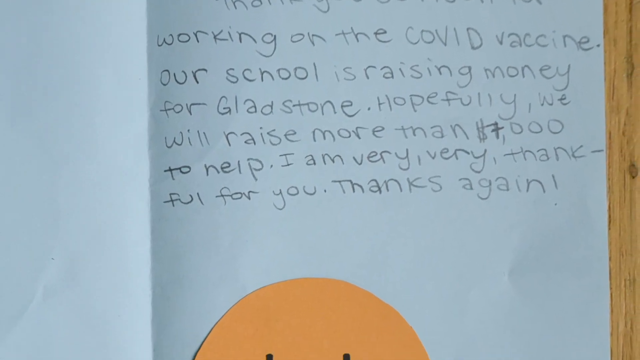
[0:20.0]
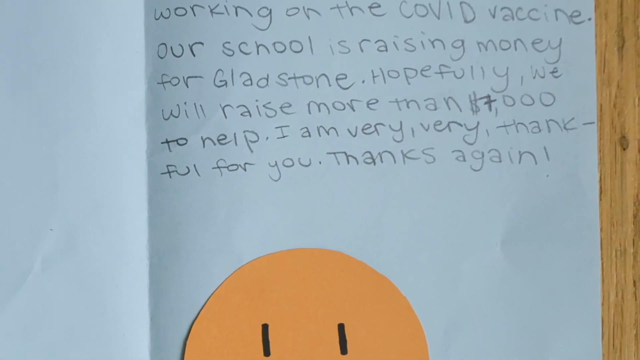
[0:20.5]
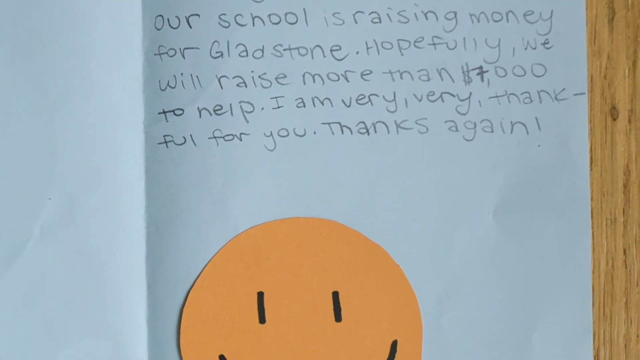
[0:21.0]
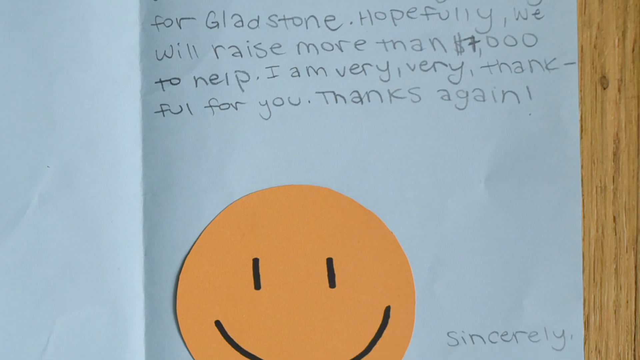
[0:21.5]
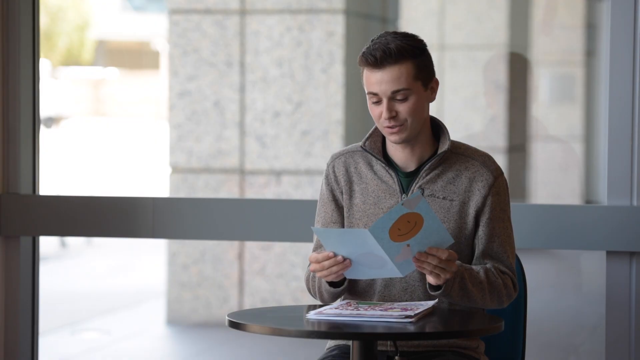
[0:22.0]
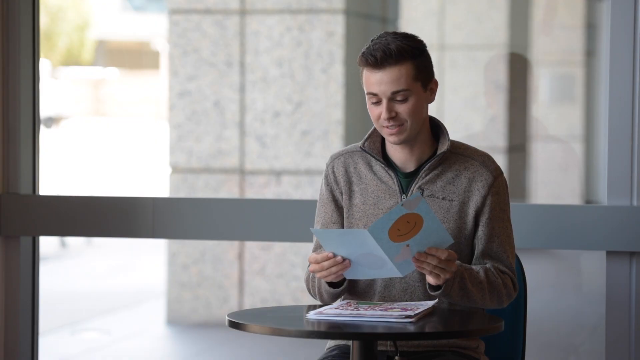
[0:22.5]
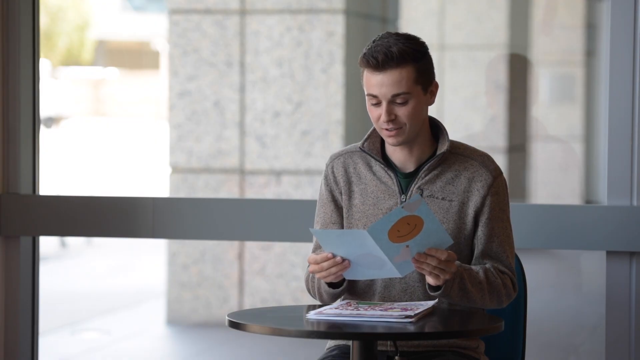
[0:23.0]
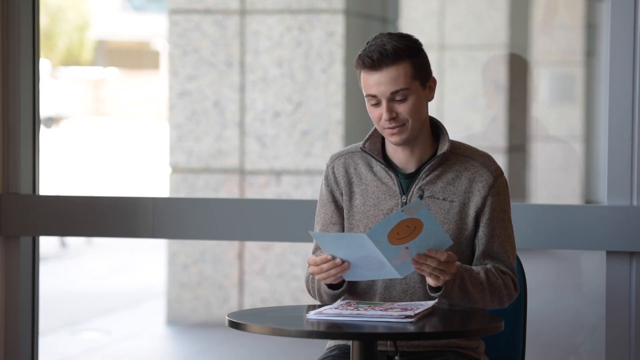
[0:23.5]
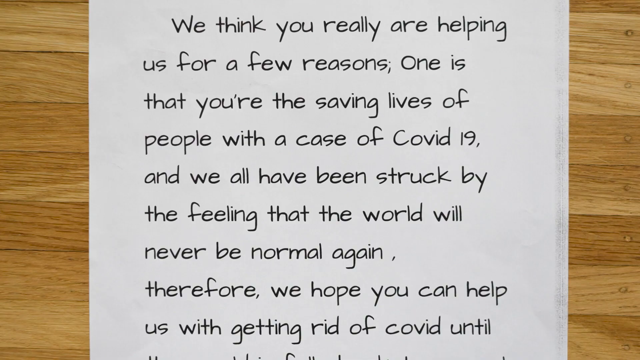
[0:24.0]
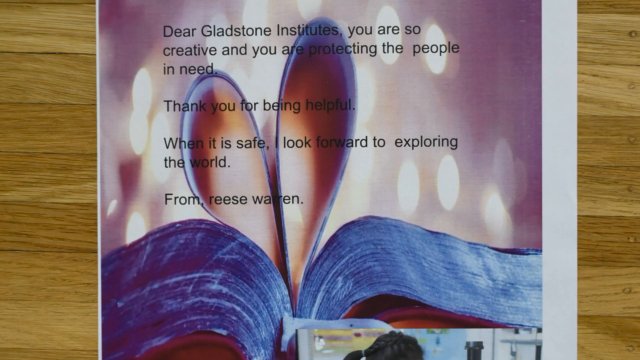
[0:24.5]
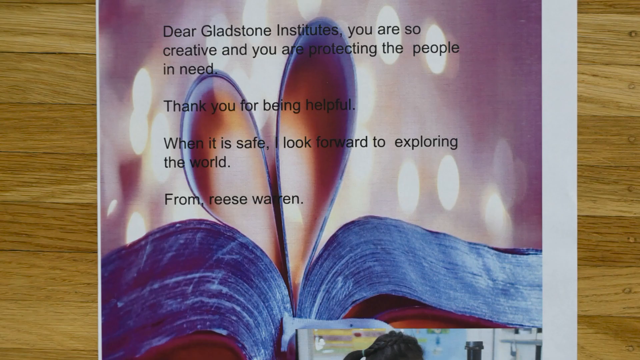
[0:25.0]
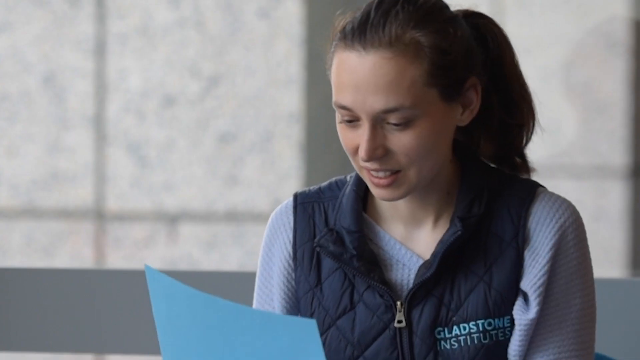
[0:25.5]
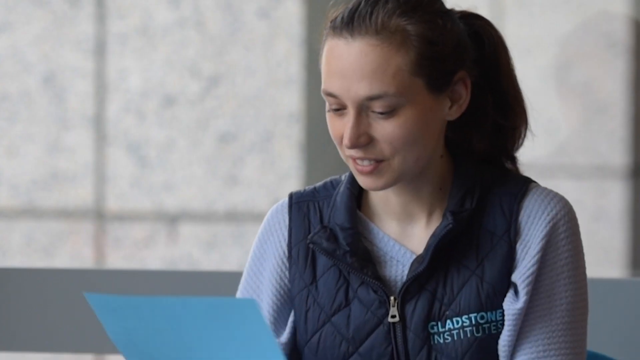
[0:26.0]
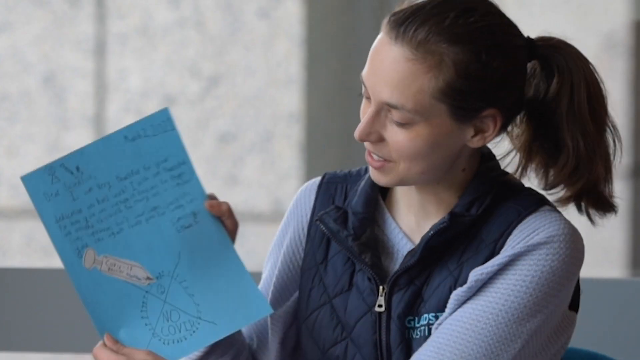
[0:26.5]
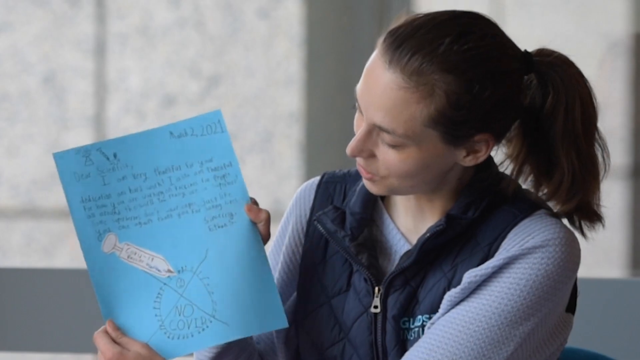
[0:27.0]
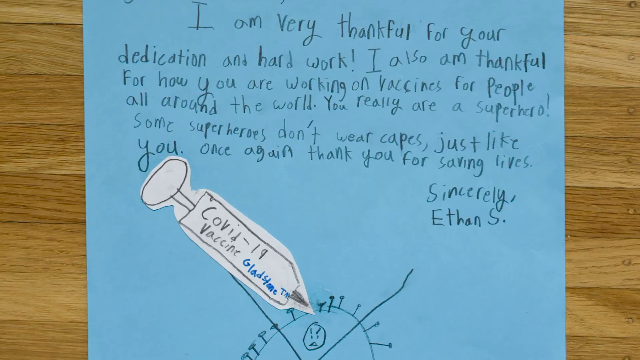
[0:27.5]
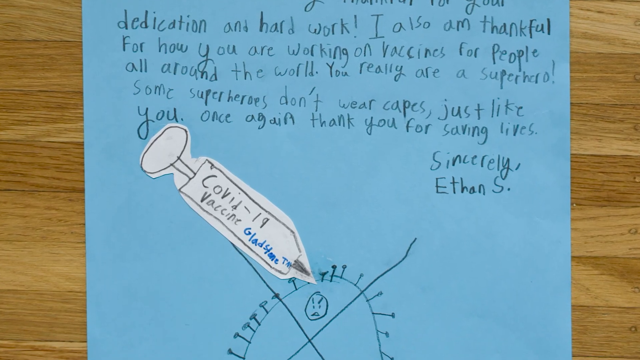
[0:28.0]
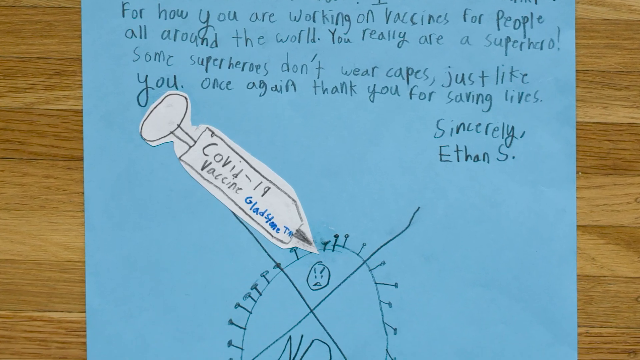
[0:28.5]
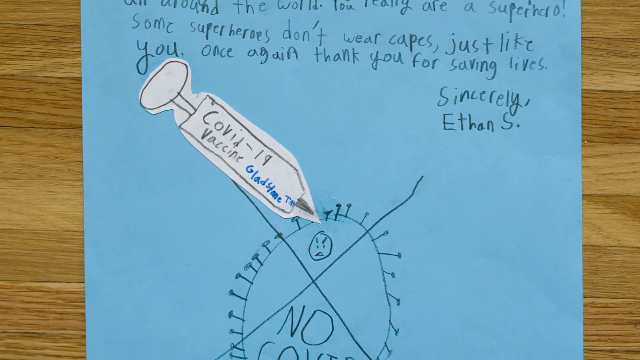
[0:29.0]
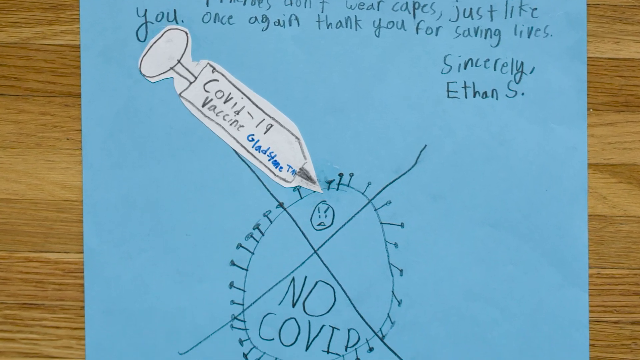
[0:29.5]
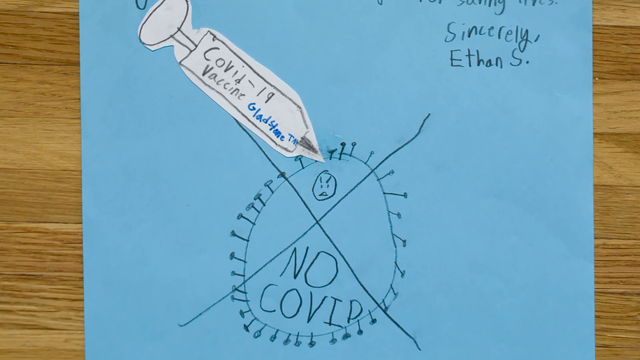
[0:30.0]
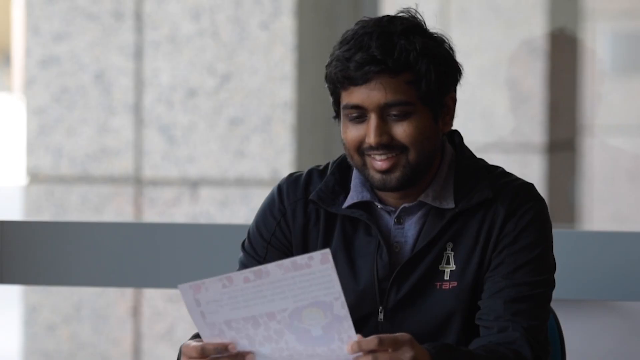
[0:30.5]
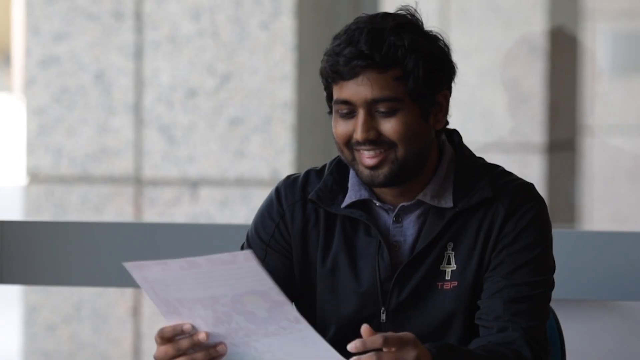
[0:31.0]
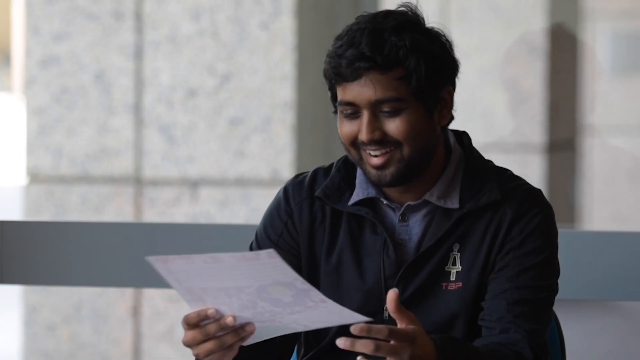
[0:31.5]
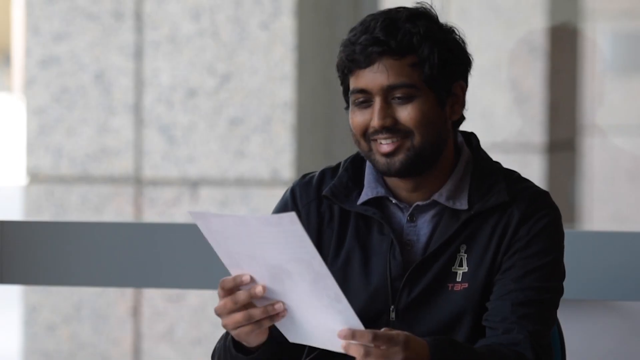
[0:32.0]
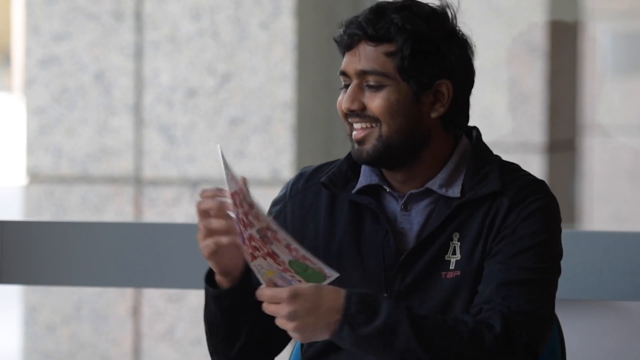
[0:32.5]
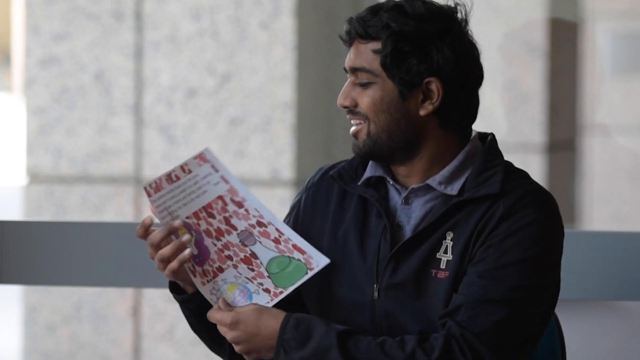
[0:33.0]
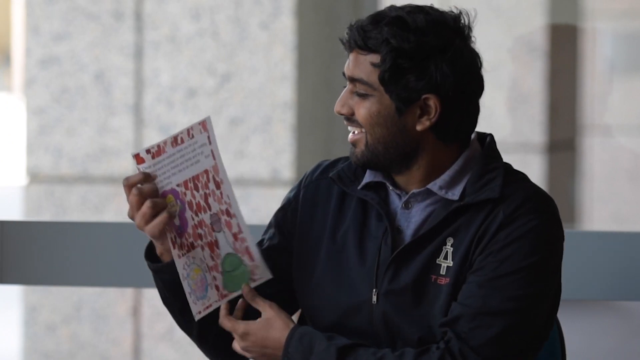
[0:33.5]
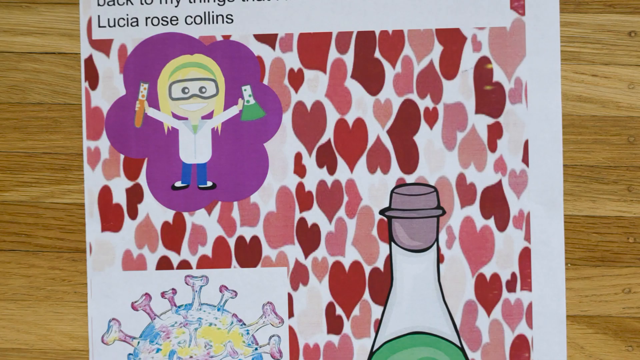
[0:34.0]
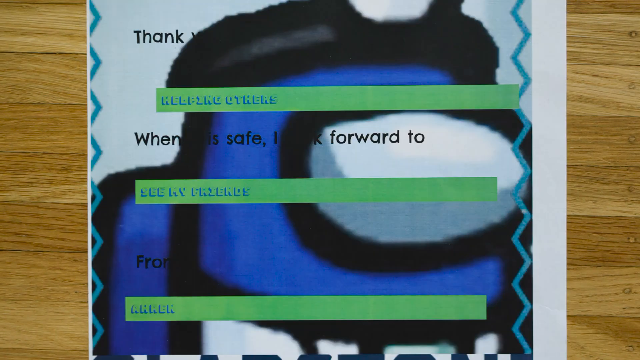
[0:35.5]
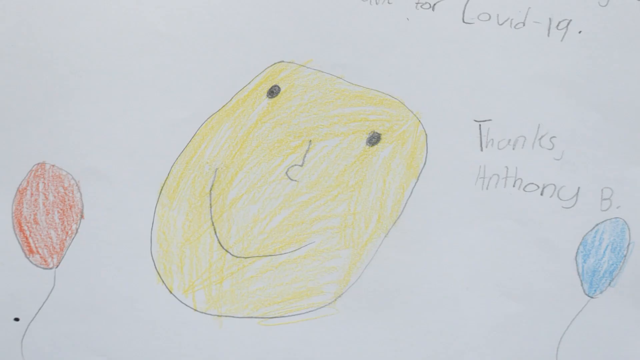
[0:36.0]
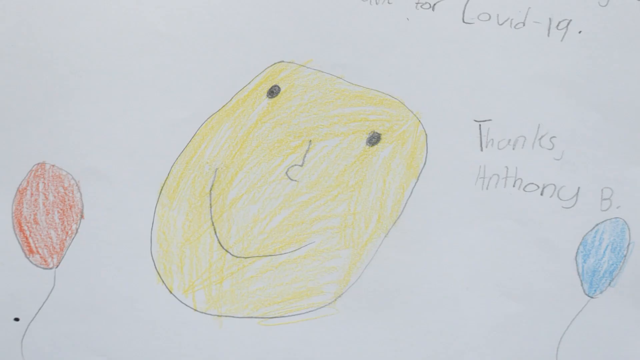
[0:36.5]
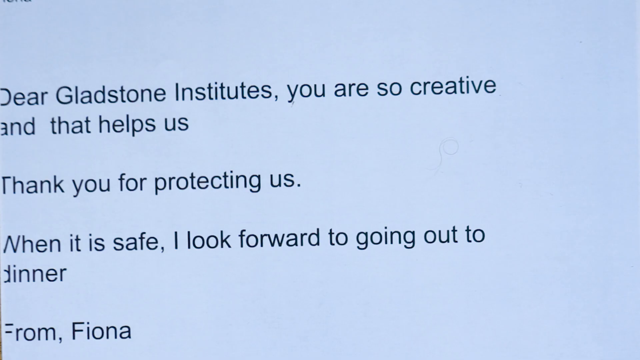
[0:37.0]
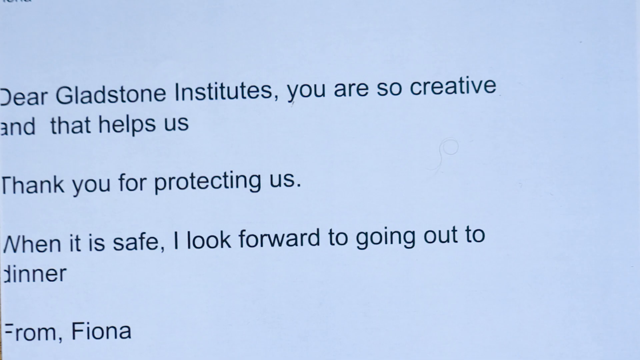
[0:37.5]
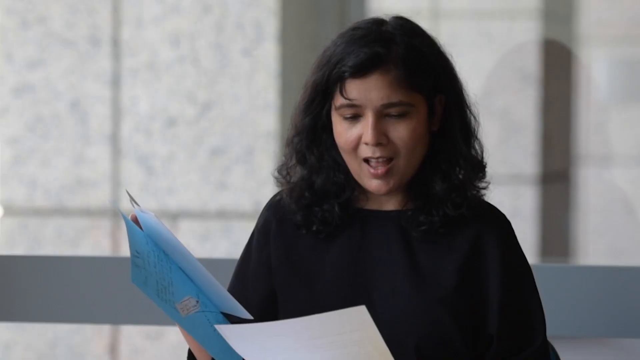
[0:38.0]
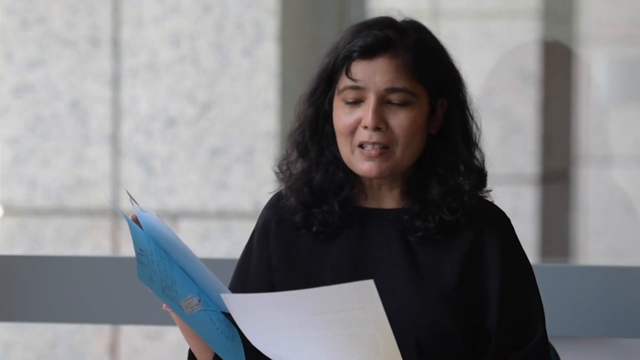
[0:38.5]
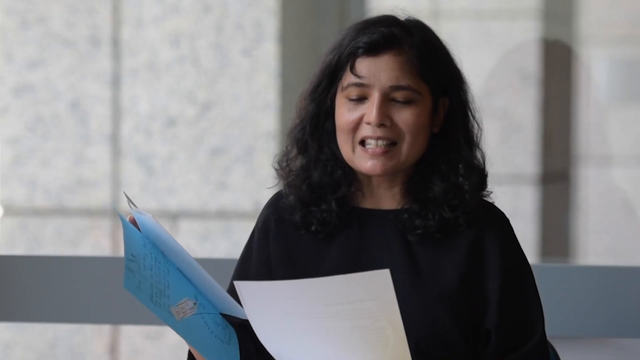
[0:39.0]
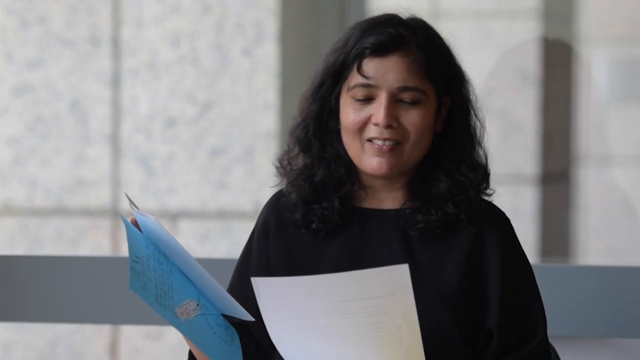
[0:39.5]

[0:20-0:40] An open piece of white paper, folded to look like a card, is shown. An orange circle has been cut out to make a smiley face. The writing, in pencil, looks childlike and mentions school and raising money. The camera pans down from the top of the page. The view changes to a man holding the card, filmed from a few feet away; he wears a long-sleeve zip-up top and is smiling, looking down at the card, and talking. The view returns to another image of the card itself, then rapidly changes through images of different cards. Next, a woman is positioned in a similar way, sitting down, looking at a card, and talking.